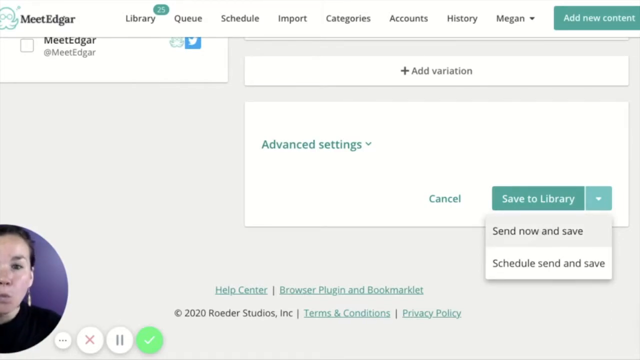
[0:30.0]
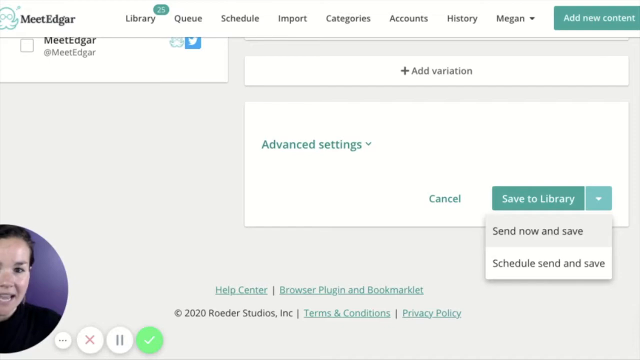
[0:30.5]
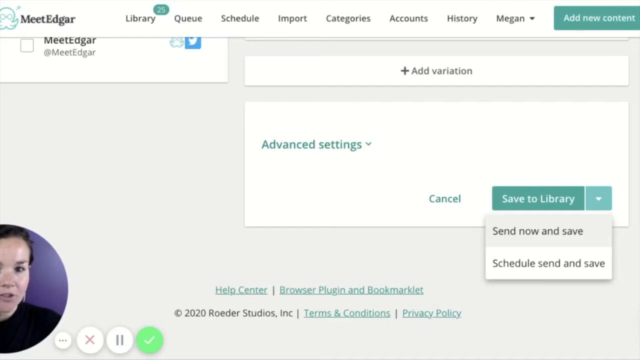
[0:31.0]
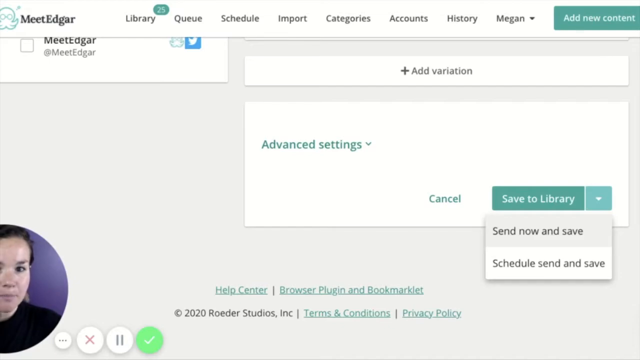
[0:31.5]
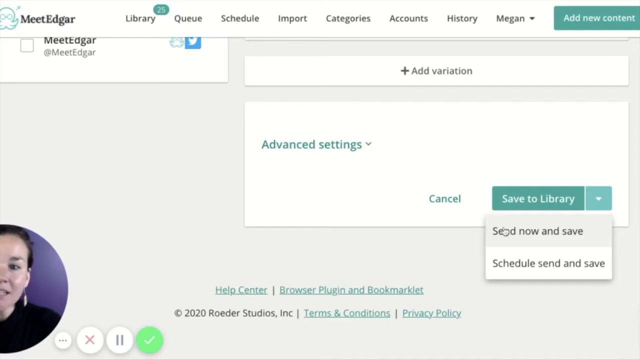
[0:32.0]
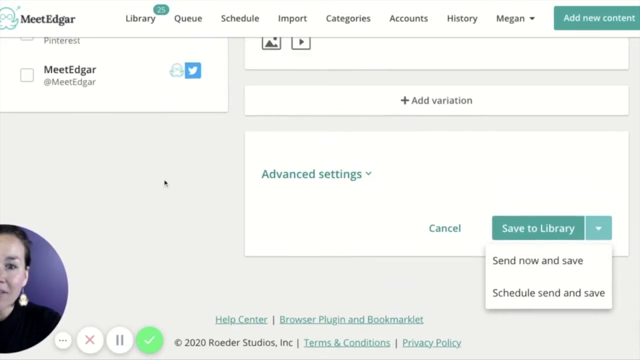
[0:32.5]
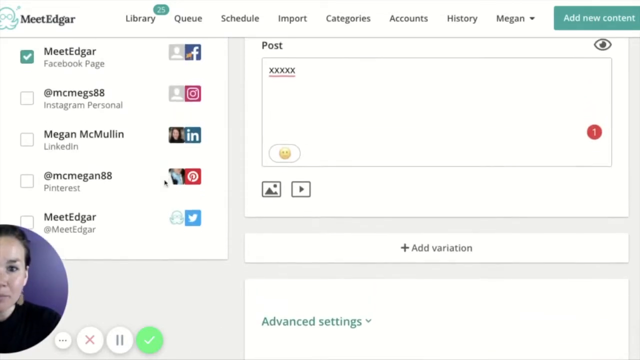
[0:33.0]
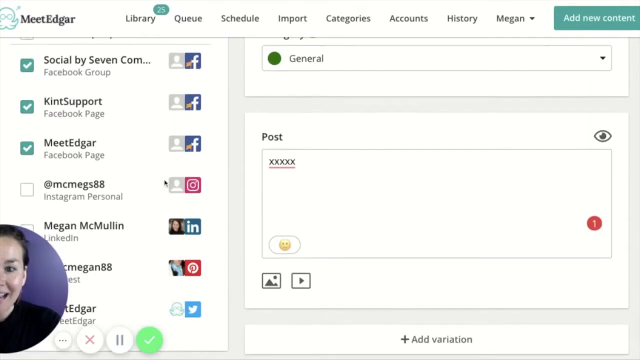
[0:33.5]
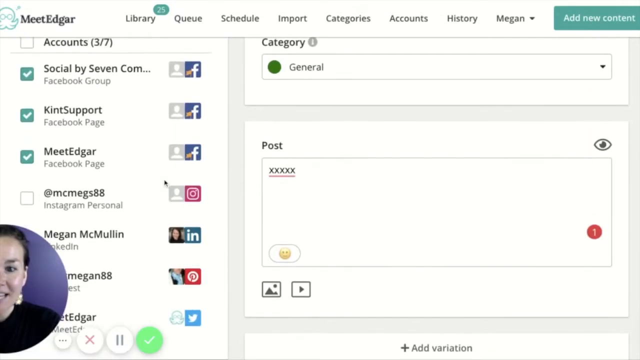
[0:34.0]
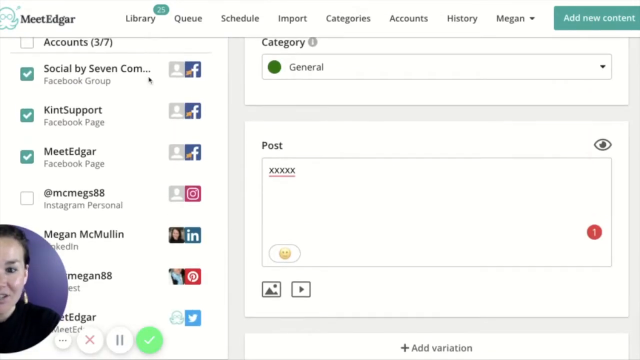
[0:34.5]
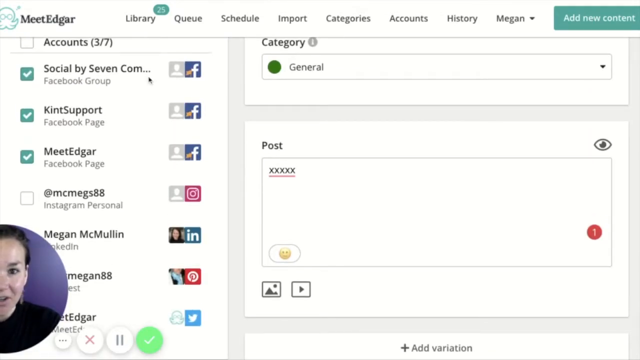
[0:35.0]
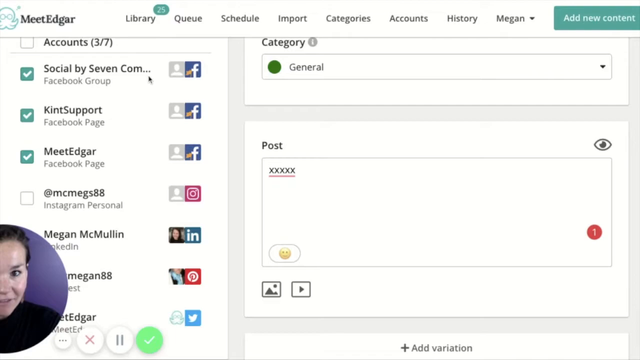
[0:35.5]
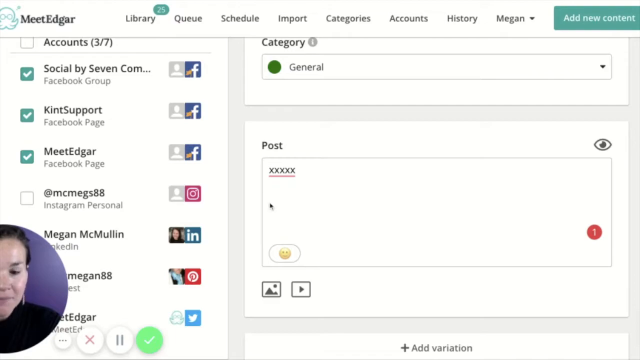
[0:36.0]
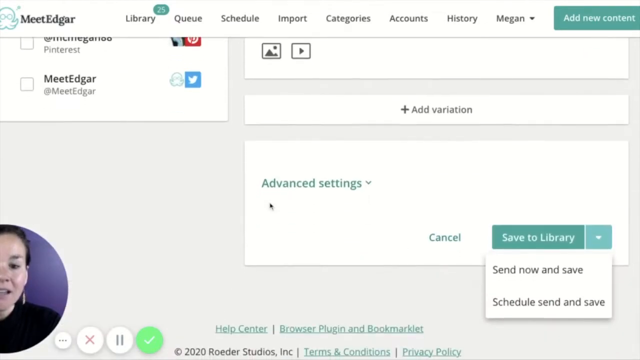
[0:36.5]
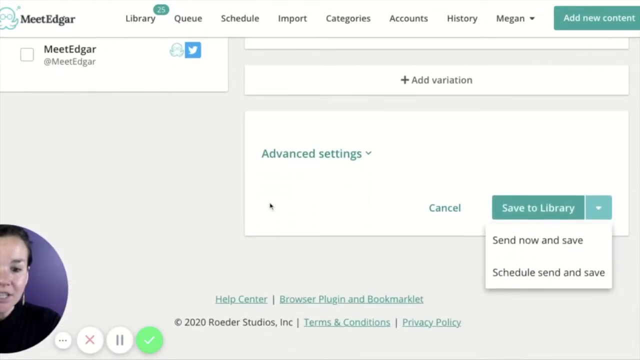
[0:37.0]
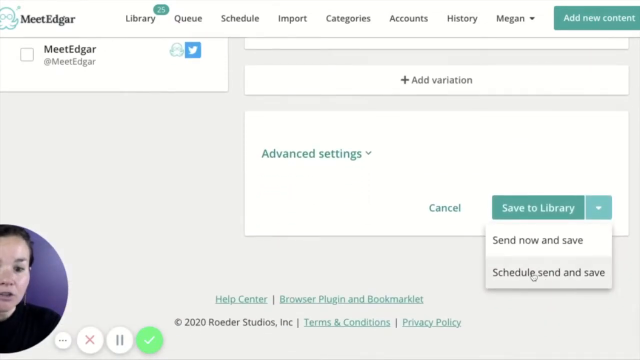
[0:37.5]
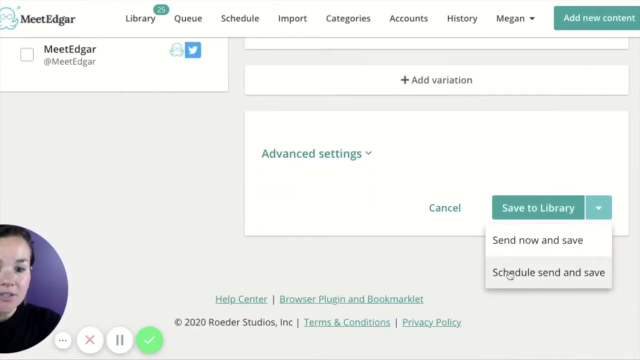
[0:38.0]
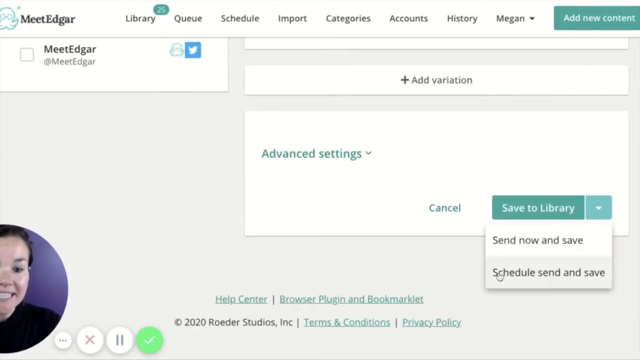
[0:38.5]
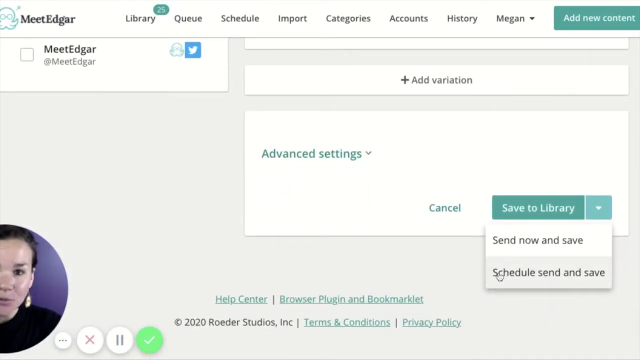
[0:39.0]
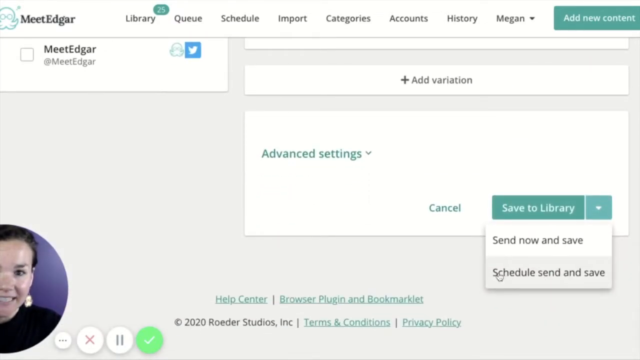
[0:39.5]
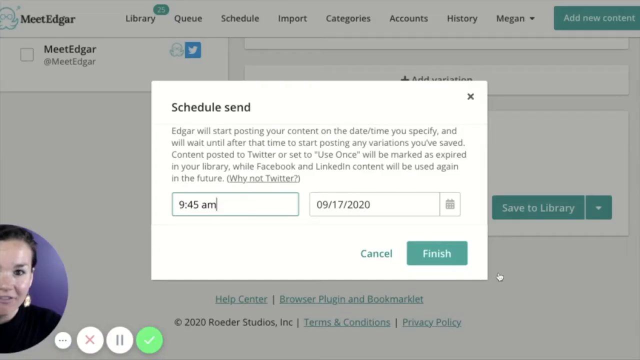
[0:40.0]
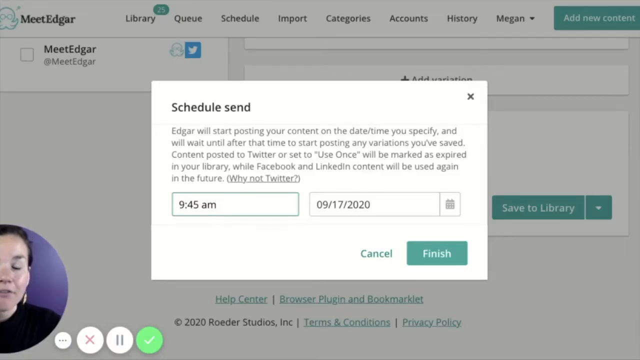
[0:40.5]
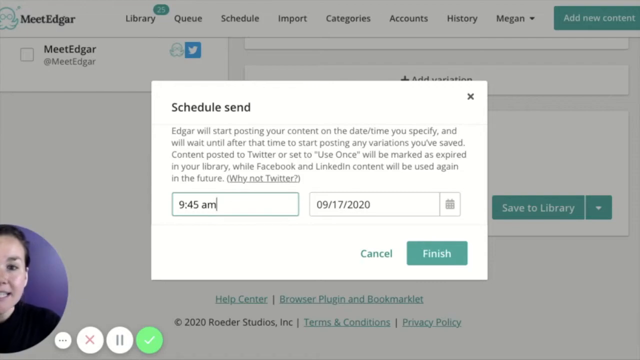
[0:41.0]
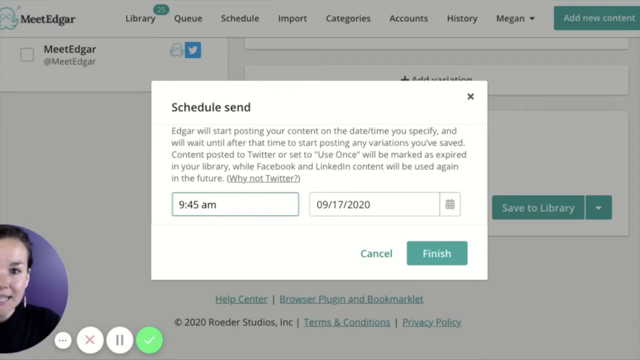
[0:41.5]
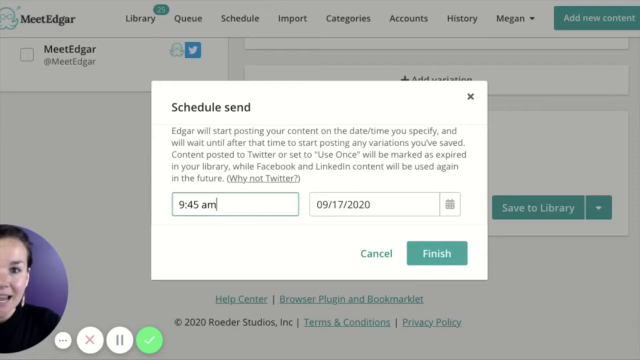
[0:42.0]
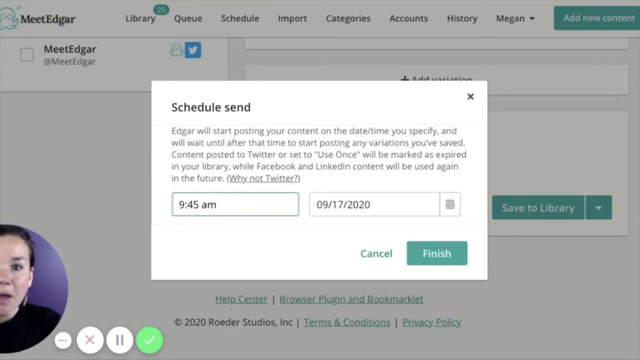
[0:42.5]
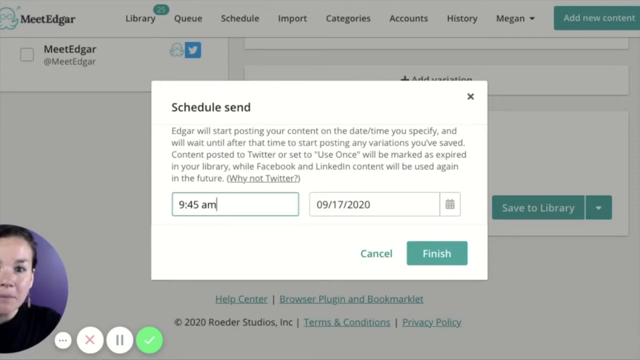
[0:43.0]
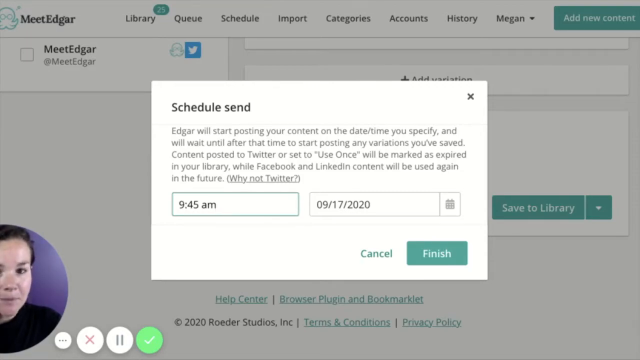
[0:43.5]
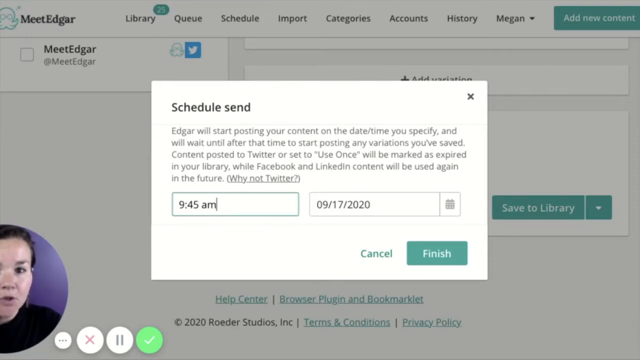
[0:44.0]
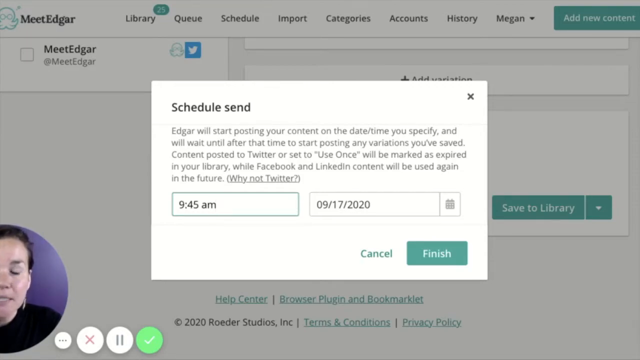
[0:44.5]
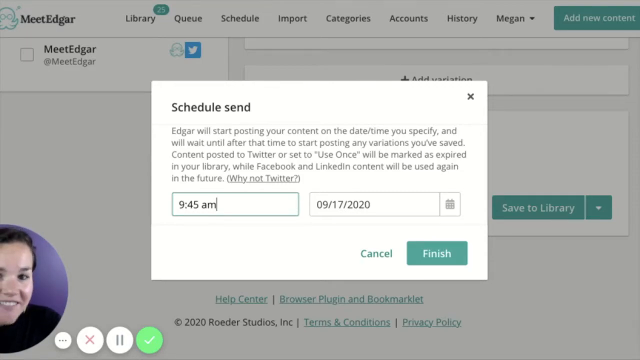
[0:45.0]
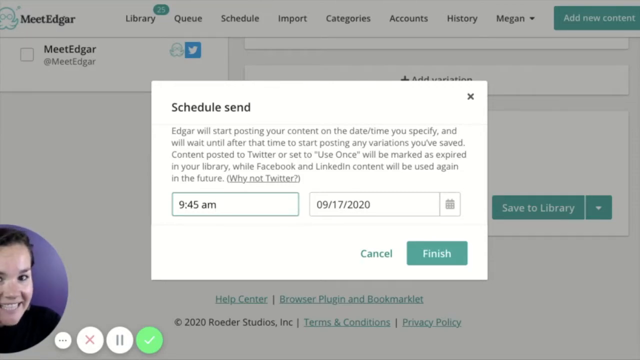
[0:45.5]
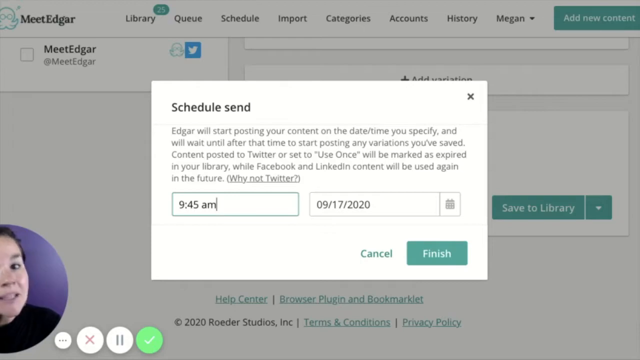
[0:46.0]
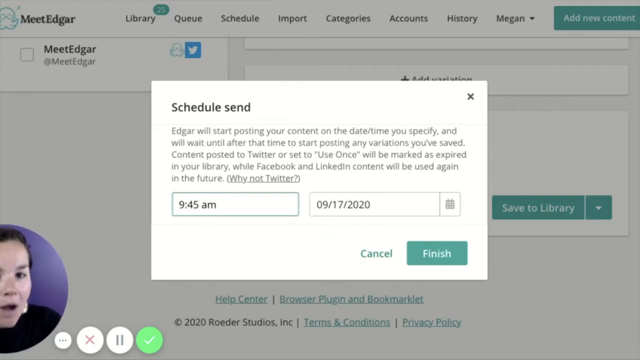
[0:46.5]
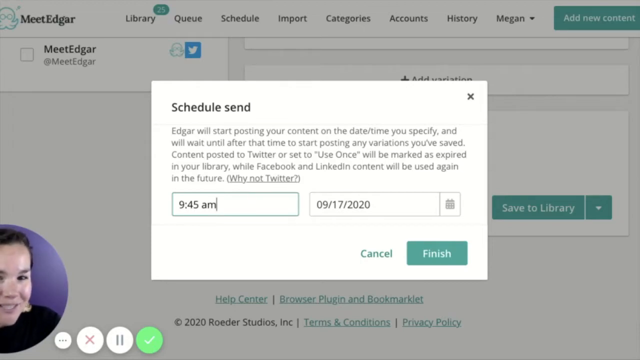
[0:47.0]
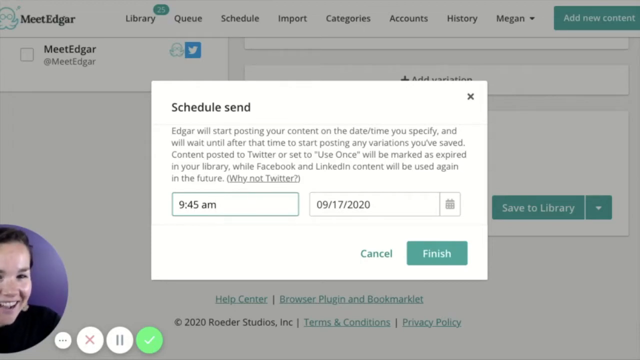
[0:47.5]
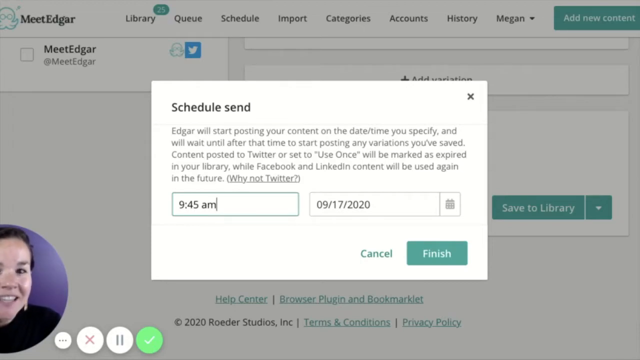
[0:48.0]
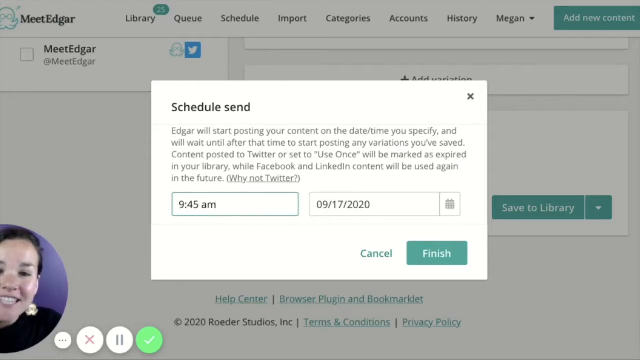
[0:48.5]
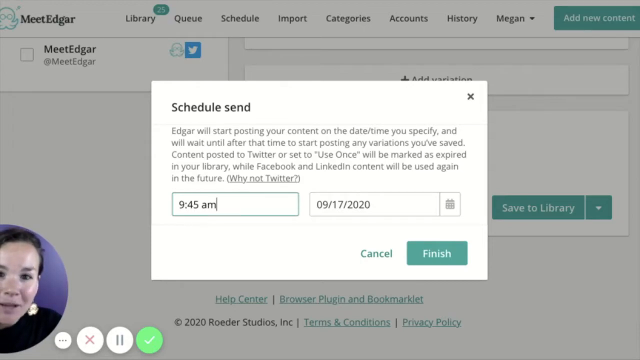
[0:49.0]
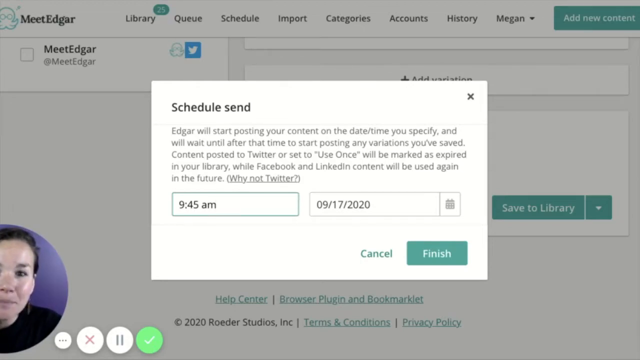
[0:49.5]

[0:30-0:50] The woman continues to speak from the bottom left corner of the screen while sharing her computer screen. At the top of the page is the text "MeetEdgar." She scrolls back up to the checklist, which shows social media icons for Facebook, Instagram, LinkedIn, Pinterest, and X; the page appears to be a social media management platform. She then schedules the post, typing 9.45 a.m., with the date 09/17/2020. There are two buttons, "Cancel" and "Finish," as well as a "Send Now" option.